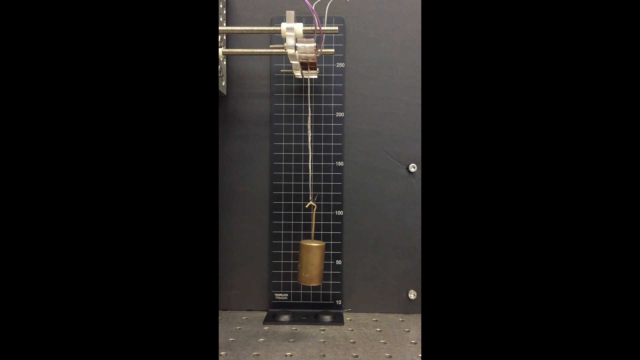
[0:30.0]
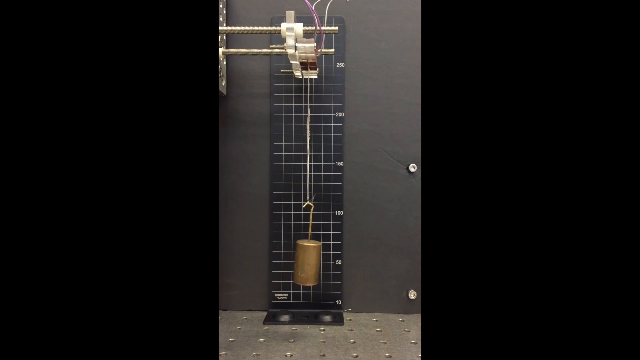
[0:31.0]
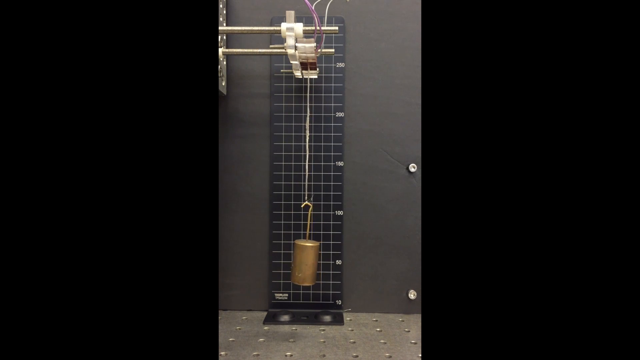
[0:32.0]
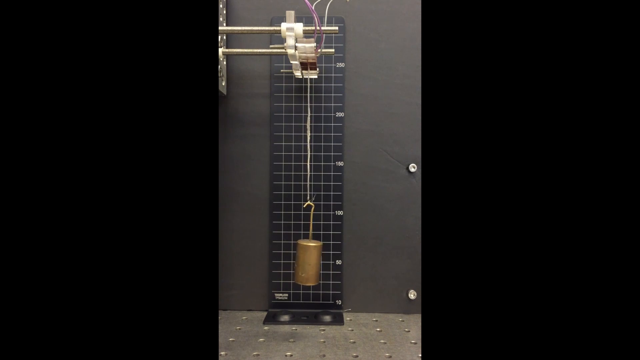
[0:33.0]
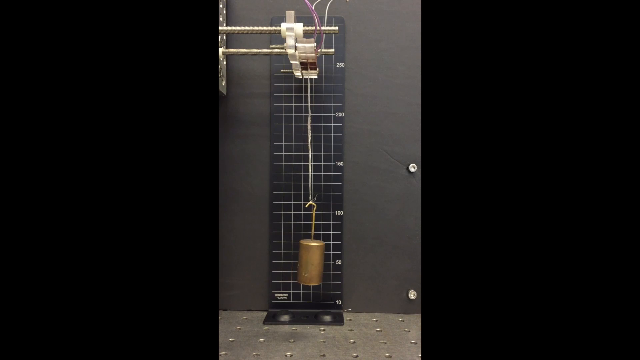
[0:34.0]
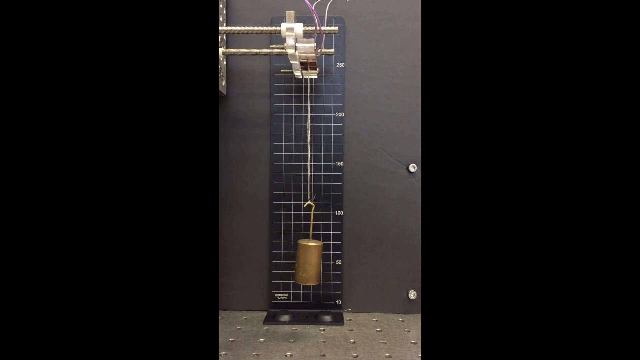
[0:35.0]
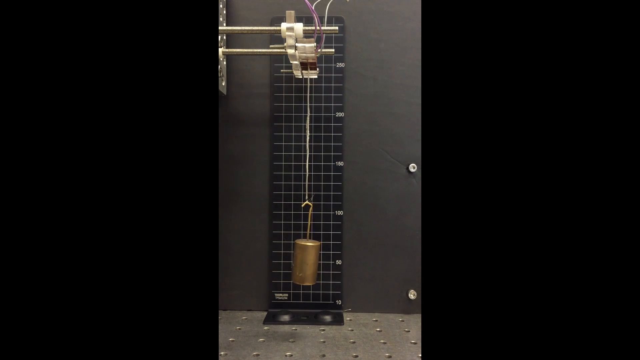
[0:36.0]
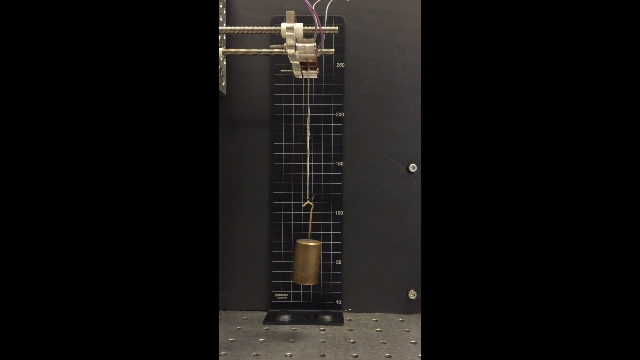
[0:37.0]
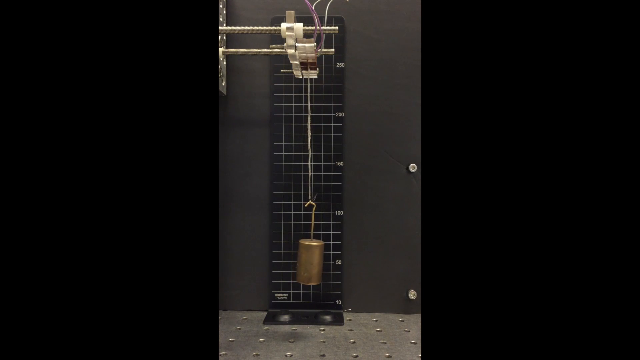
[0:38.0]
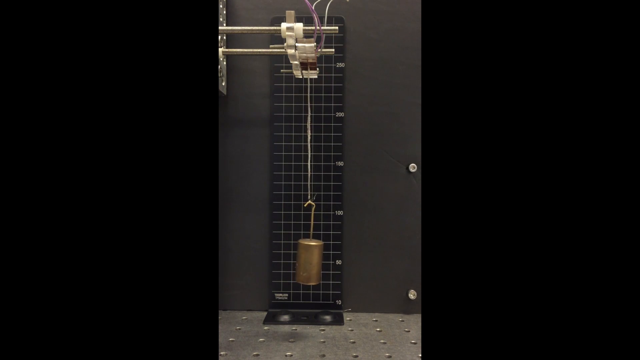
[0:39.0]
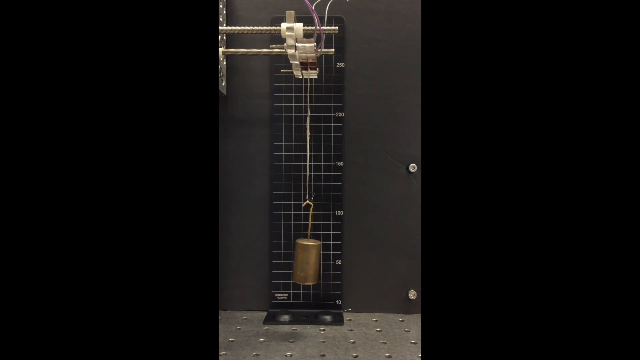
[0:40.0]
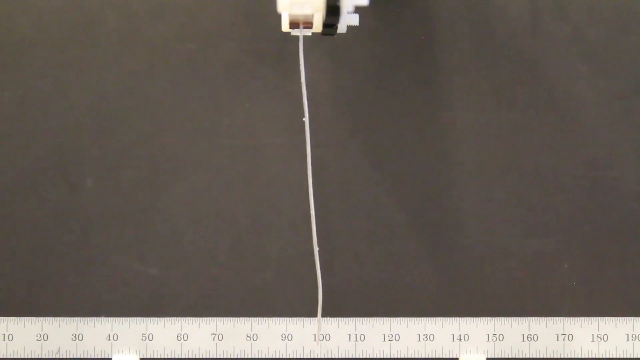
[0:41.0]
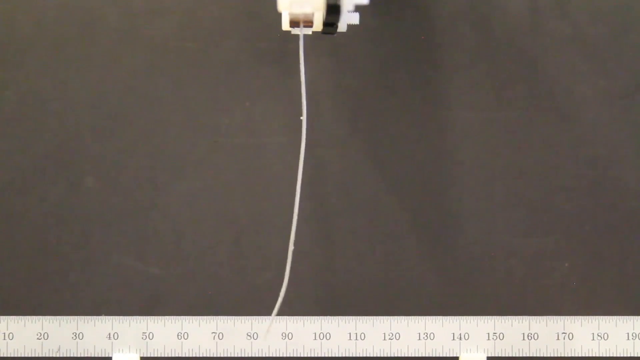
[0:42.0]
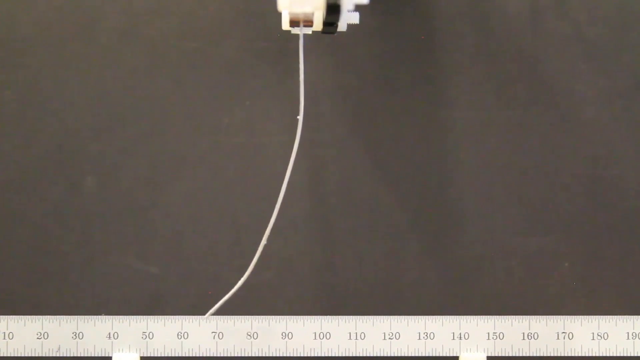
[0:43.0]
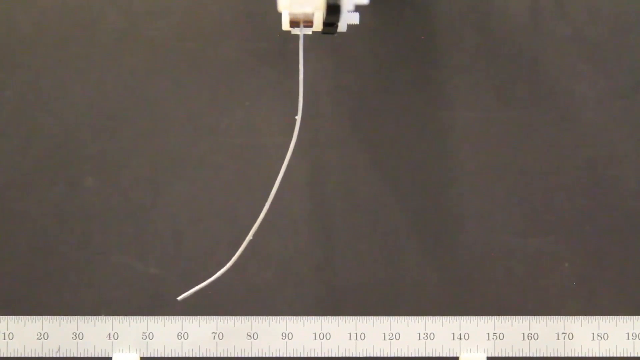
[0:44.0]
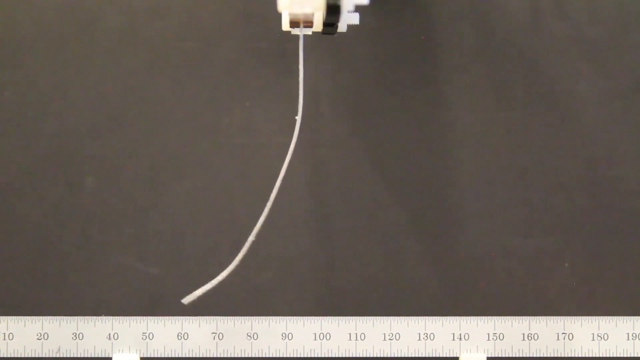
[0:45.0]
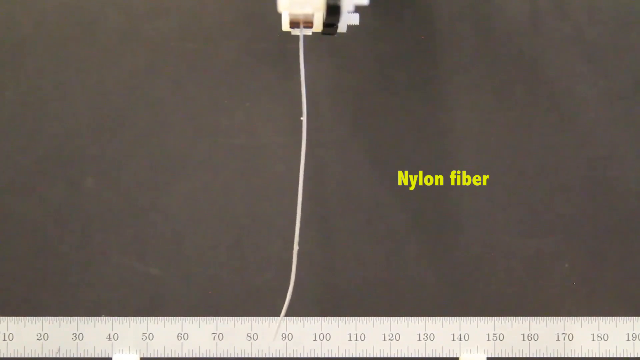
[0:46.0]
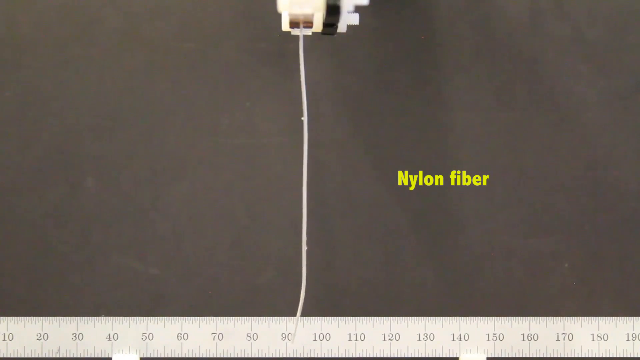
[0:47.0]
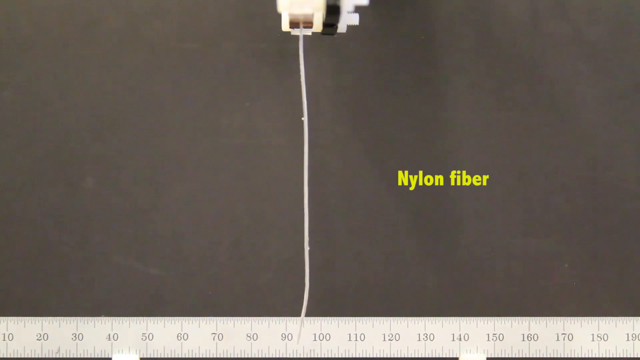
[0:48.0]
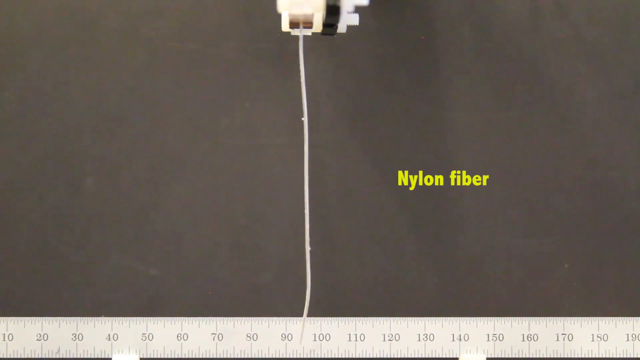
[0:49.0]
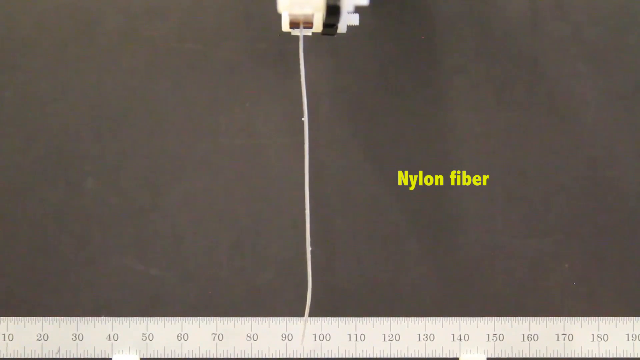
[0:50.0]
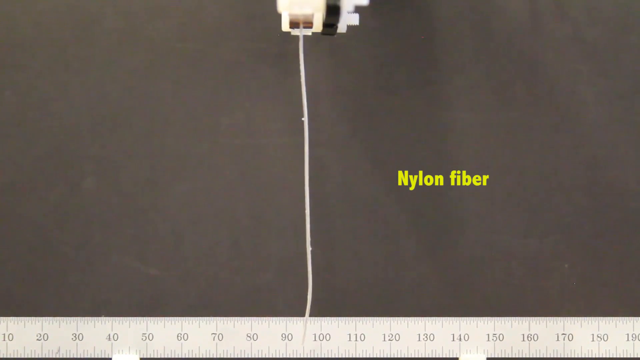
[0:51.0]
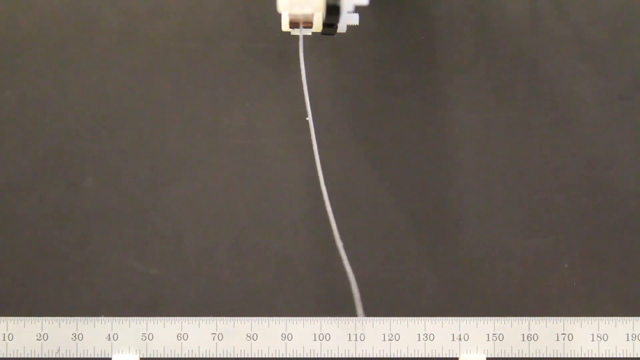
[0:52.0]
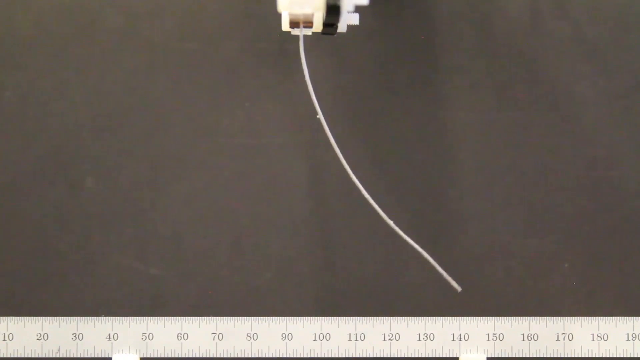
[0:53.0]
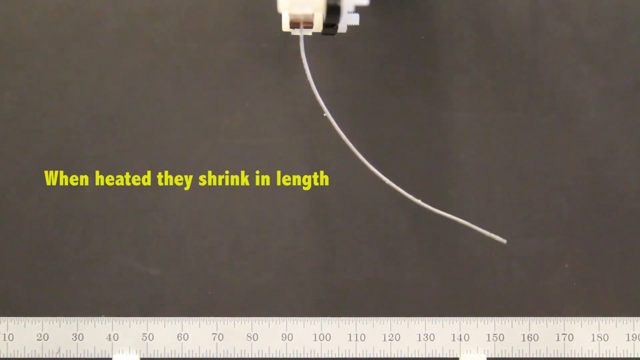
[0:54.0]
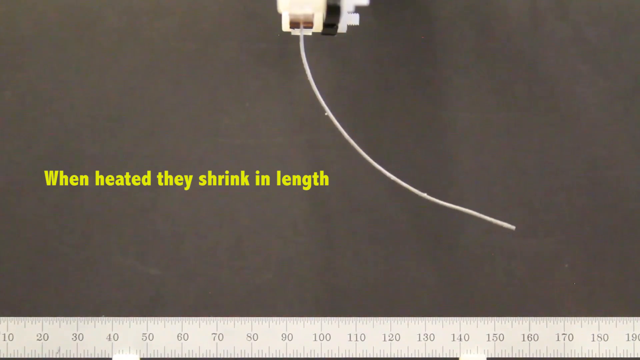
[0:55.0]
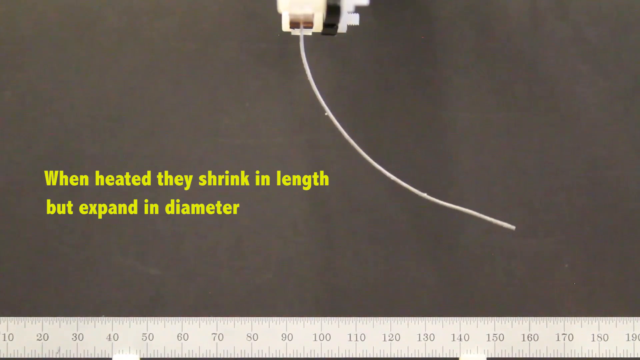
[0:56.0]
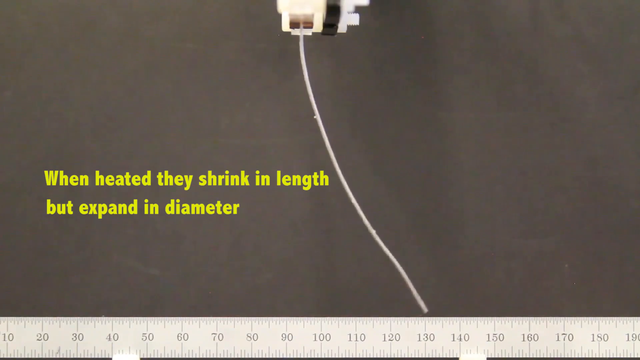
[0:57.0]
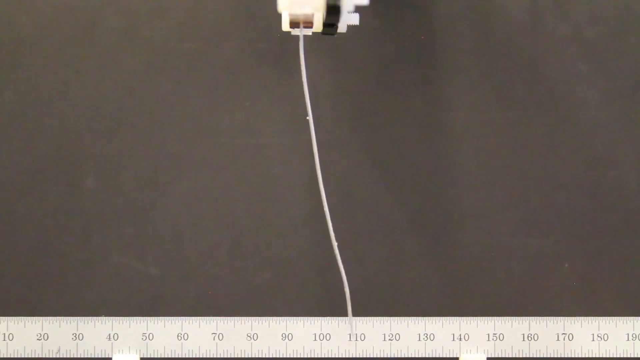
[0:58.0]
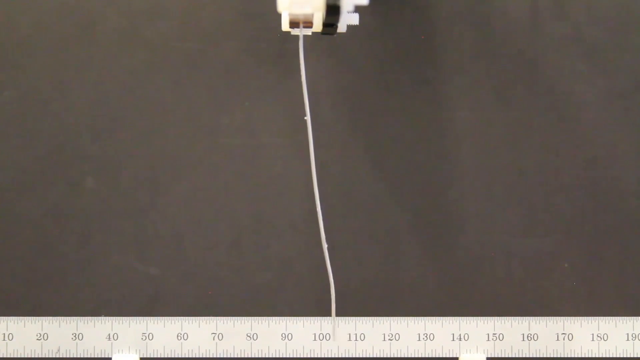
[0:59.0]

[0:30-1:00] The device attached to a wall is still shown, with two thick metal poles coming out of it. What looks to be an object made of plastic hangs on the poles, and a line goes down with a thick gold weight at the end. Attached to the other wall is a black piece of metal that is attached to the floor and goes up the wall; it seems to have white Excel-like lines all over it, with slightly blurry numbers on the side, so it may be measuring something. The weight is kind of swinging back and forth. The view then seems to switch to a close-up of the plastic piece hanging off the metal poles and the white line, which is definitely thicker. The line moves up on its own, not naturally, as if something in it allows it to move. Yellow text pops up that says "nylon fiber", along with "www.Flydreamers.com".